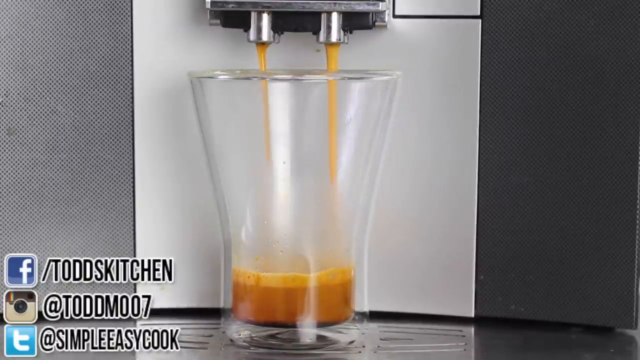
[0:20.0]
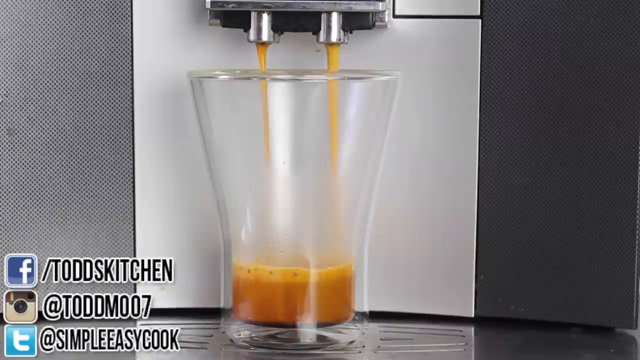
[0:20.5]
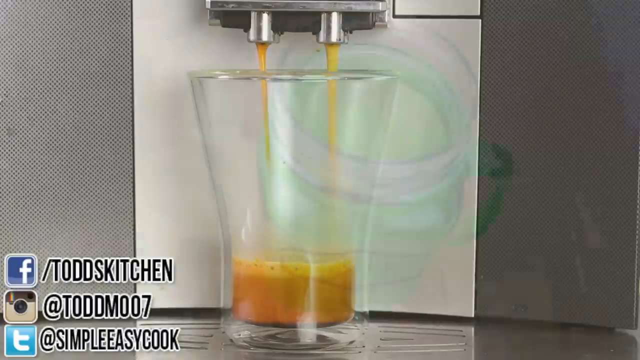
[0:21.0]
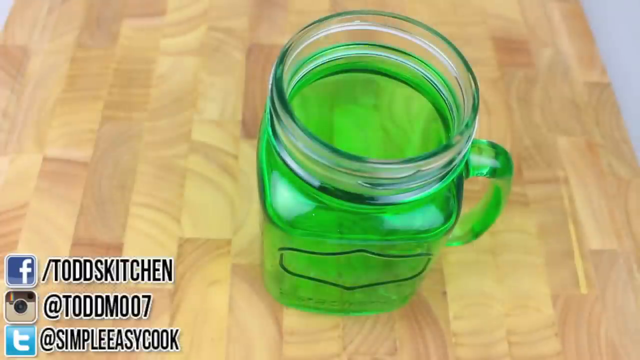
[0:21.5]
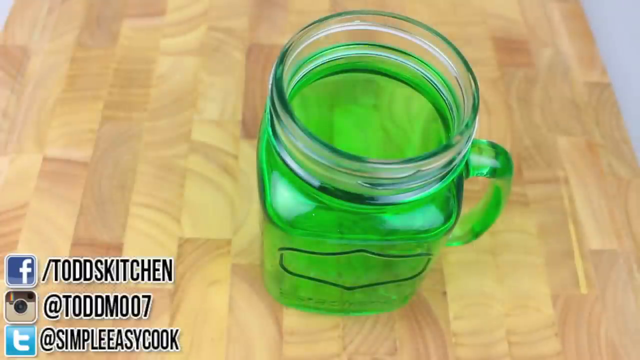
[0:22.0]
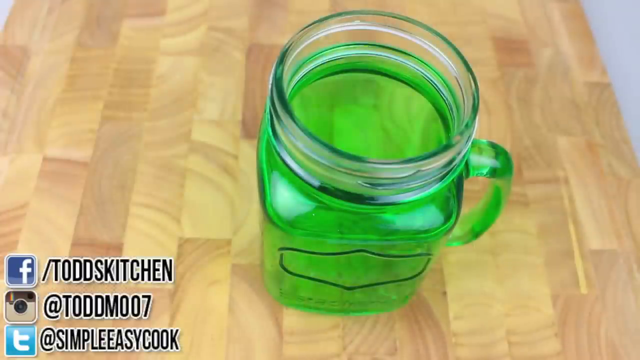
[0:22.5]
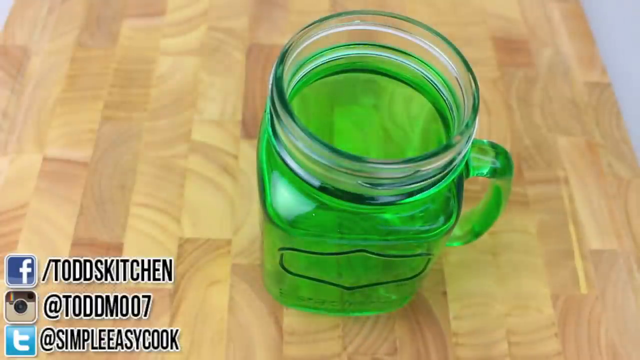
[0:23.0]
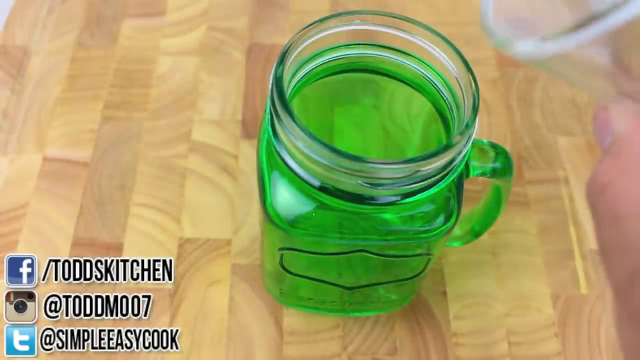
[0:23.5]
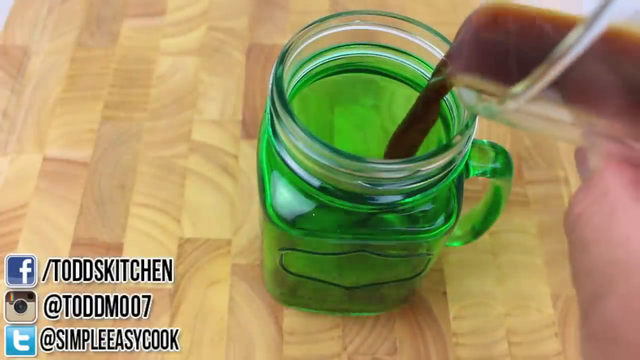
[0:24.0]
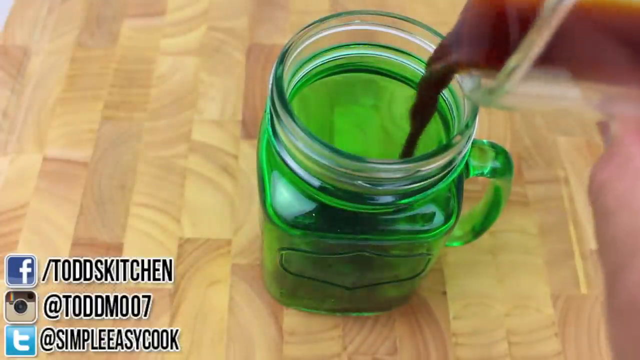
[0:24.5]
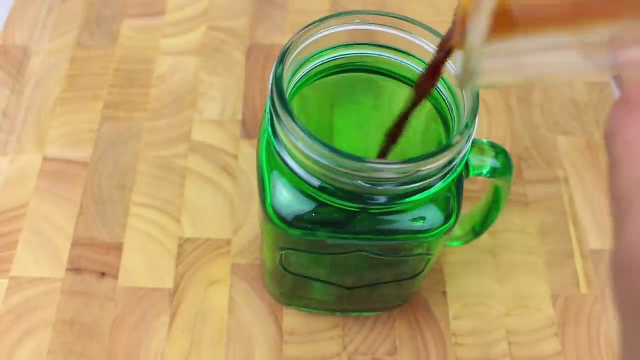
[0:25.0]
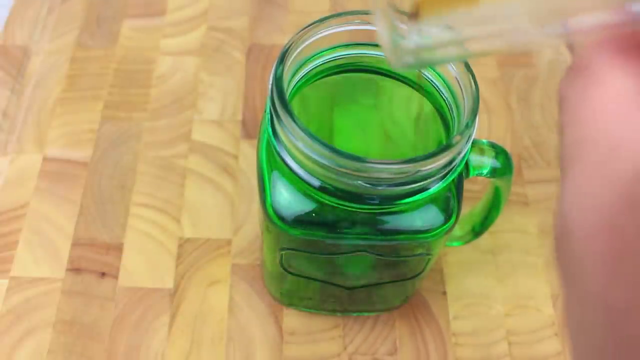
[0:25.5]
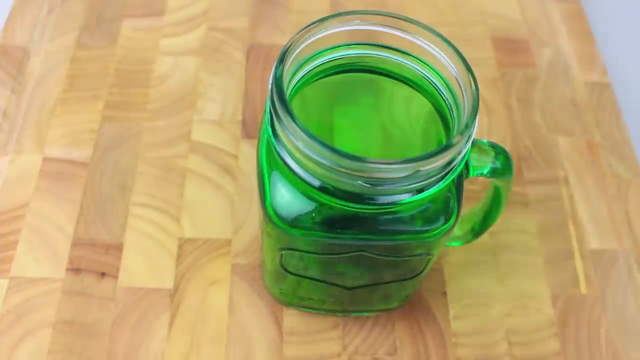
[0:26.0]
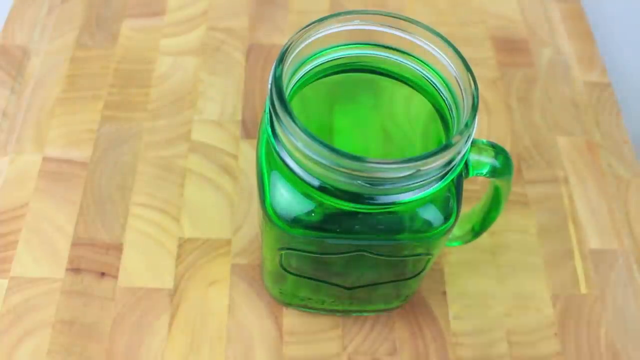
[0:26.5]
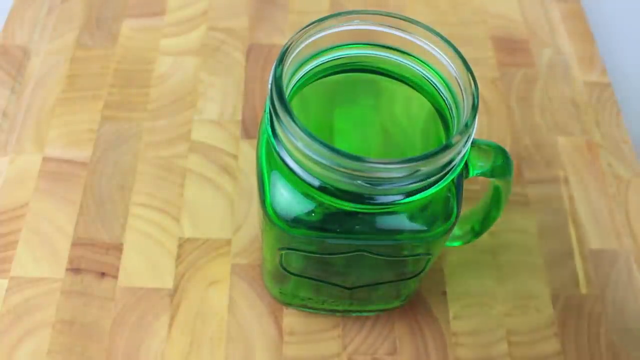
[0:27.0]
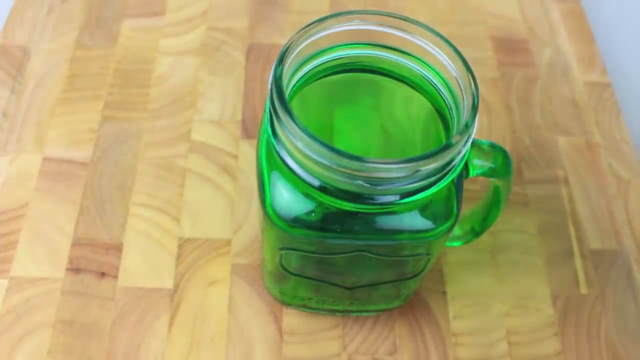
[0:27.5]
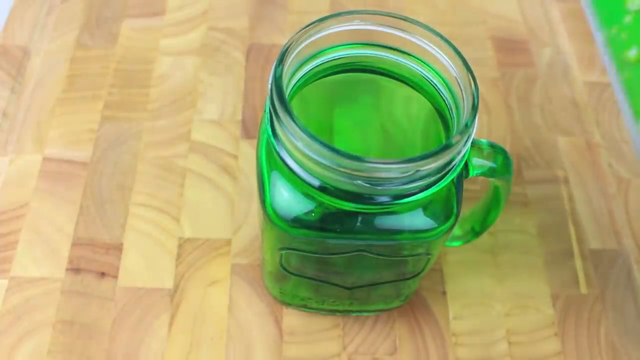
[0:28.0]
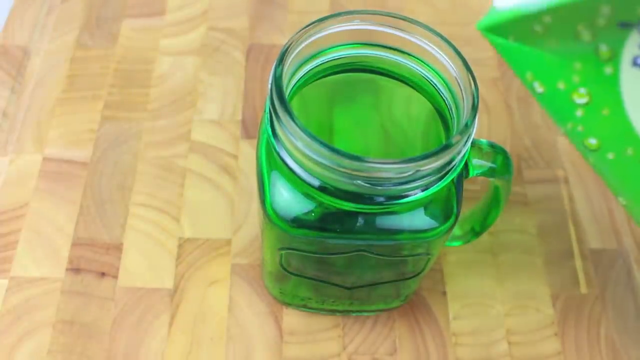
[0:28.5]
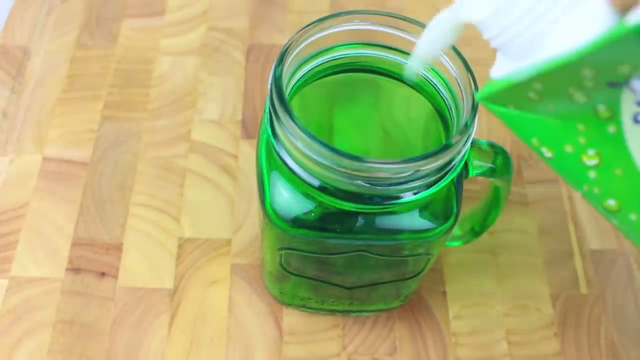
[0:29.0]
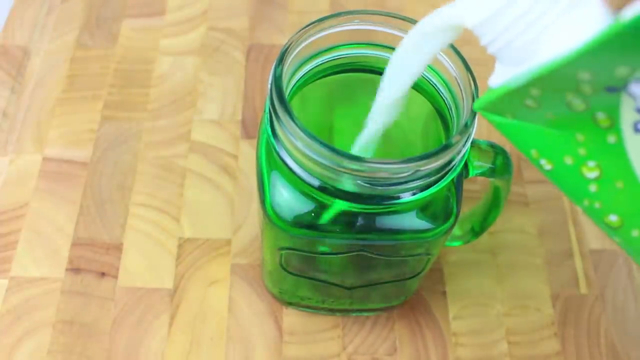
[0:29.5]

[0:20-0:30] The foaming brown liquid is poured into the glass. The view then changes to an overhead shot of a butcher block table with a mason jar type glass with a handle on it, filled almost to the top with a lime green liquid. Todd's hands appear at the right edge of the image holding the glass filled with the brown fluid. He pours the brown fluid into the green liquid in the glass on the table. The two mix very little, and most of the brown liquid stays near the bottom. He then pours milk from a lime green container into the mixture.